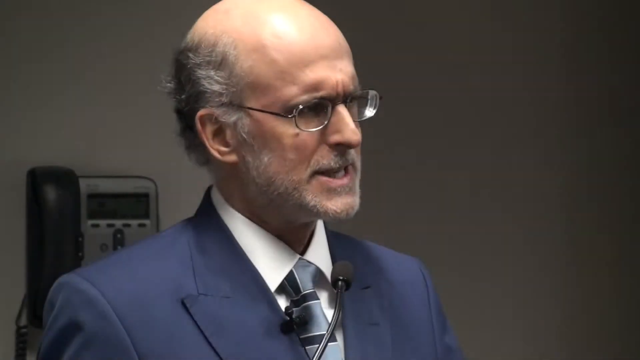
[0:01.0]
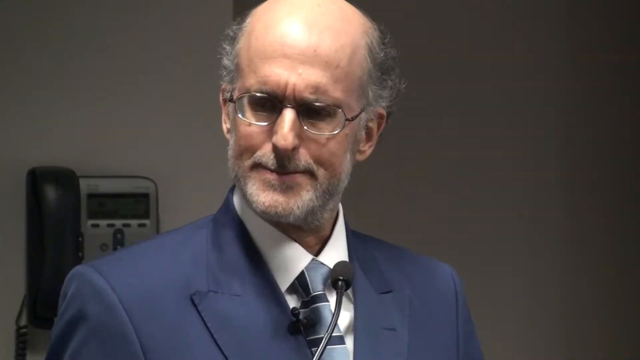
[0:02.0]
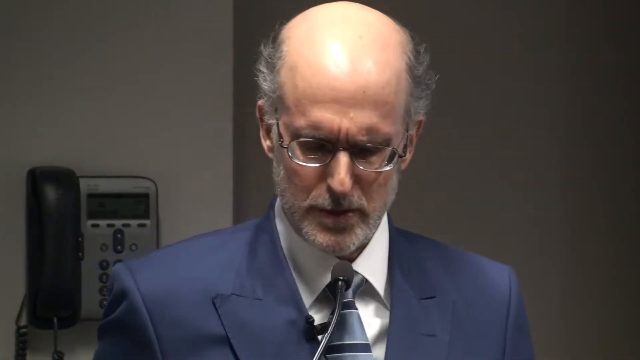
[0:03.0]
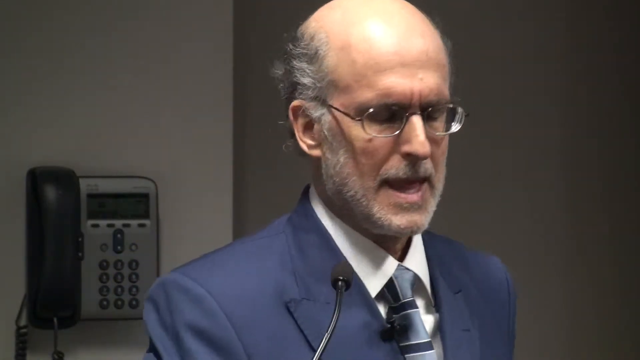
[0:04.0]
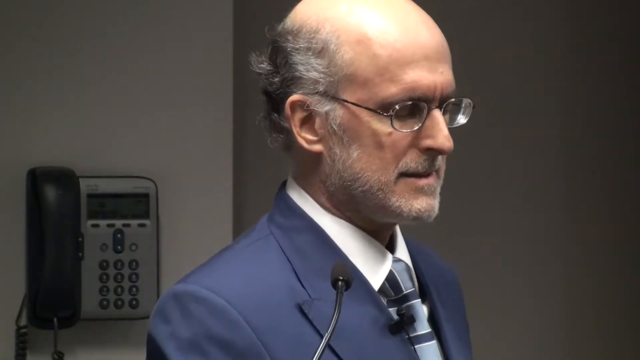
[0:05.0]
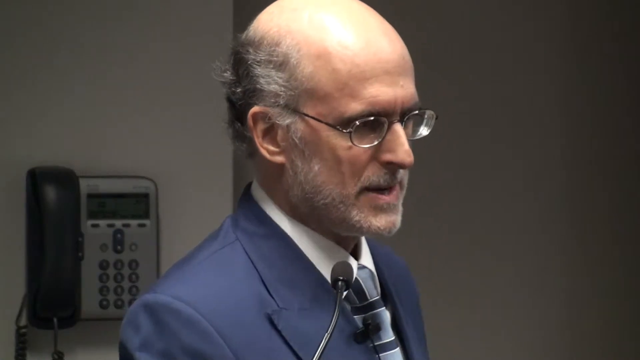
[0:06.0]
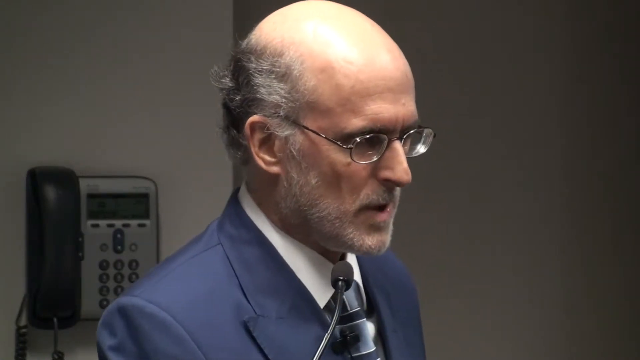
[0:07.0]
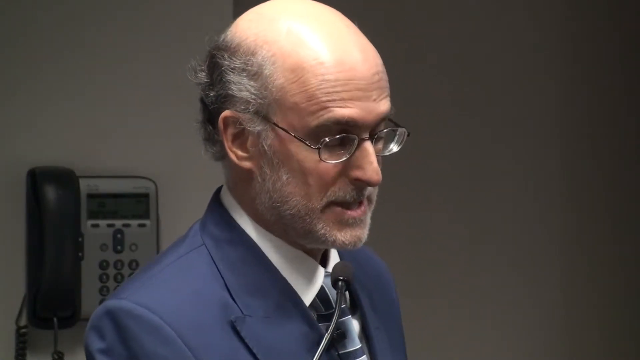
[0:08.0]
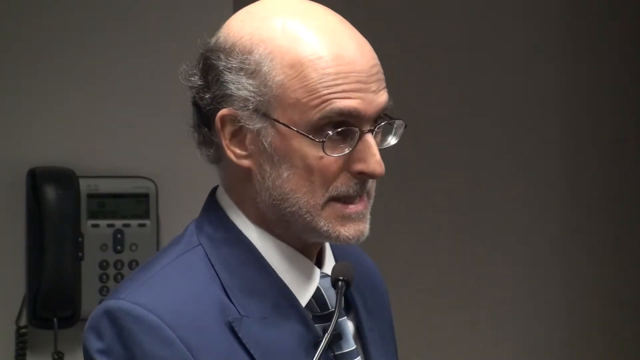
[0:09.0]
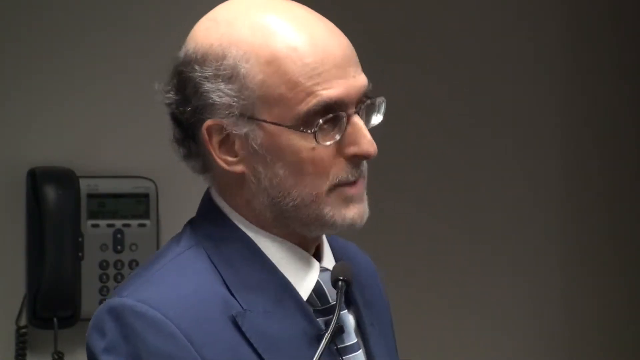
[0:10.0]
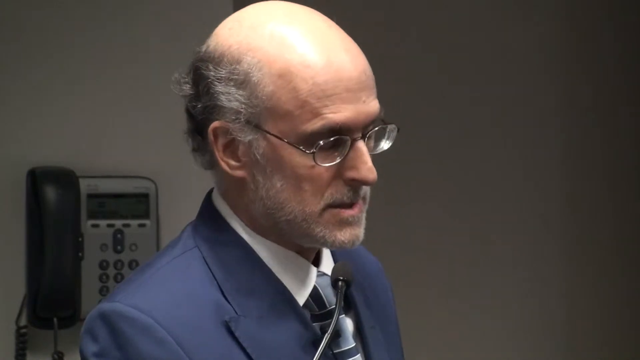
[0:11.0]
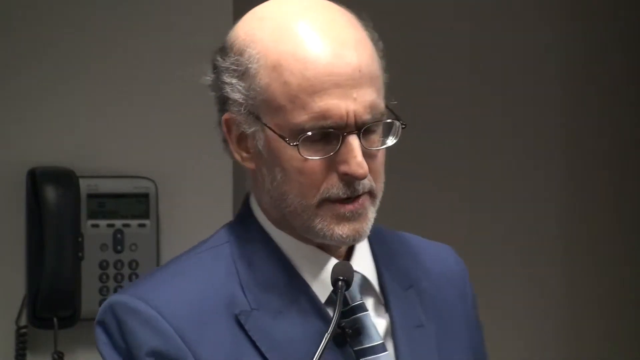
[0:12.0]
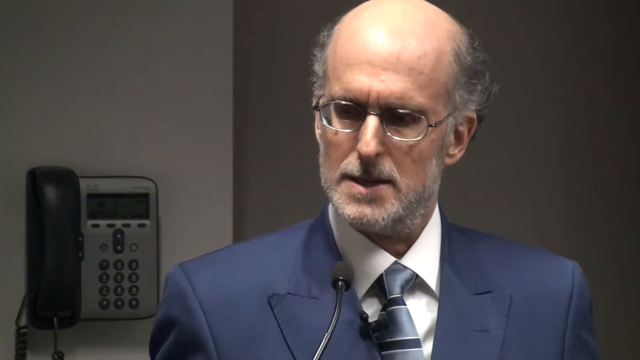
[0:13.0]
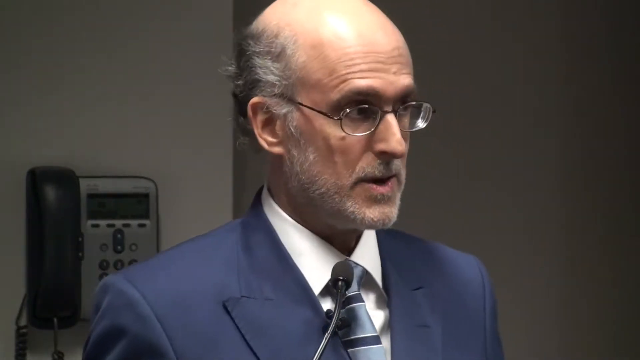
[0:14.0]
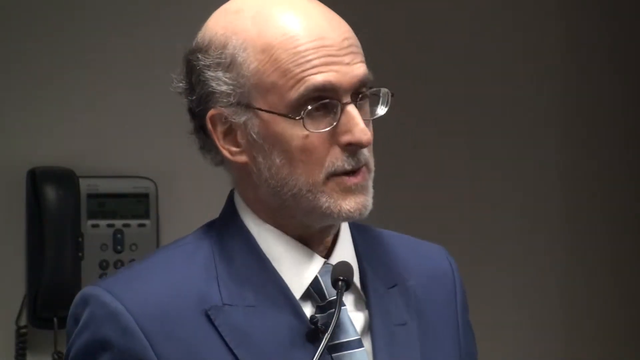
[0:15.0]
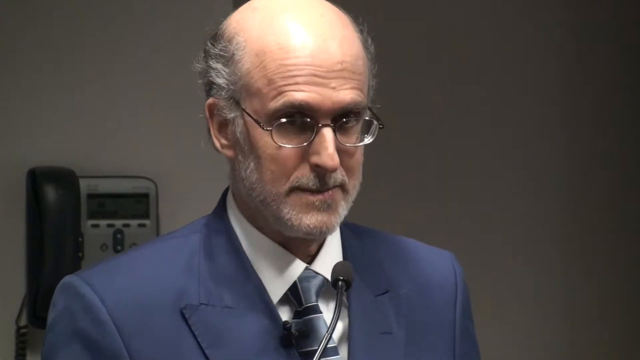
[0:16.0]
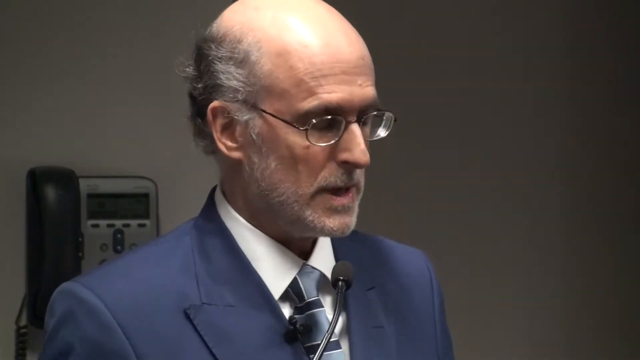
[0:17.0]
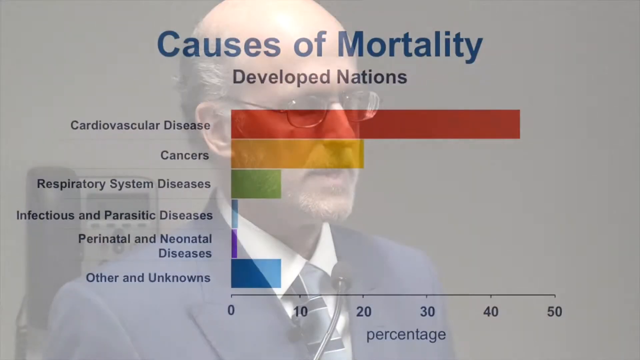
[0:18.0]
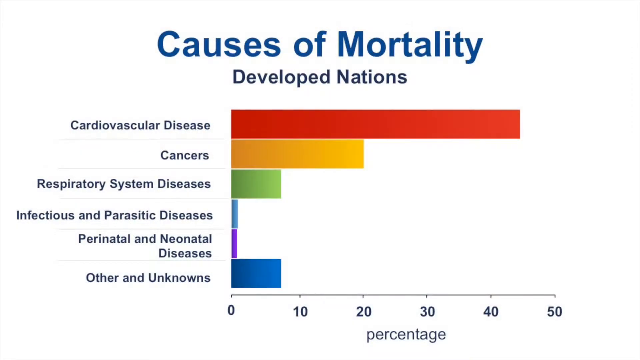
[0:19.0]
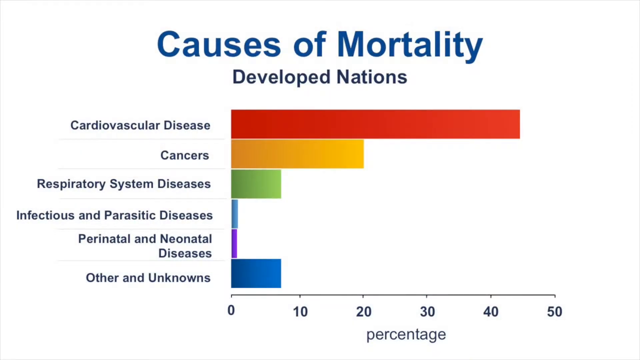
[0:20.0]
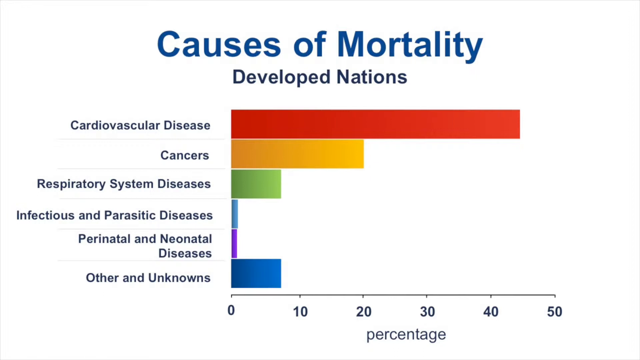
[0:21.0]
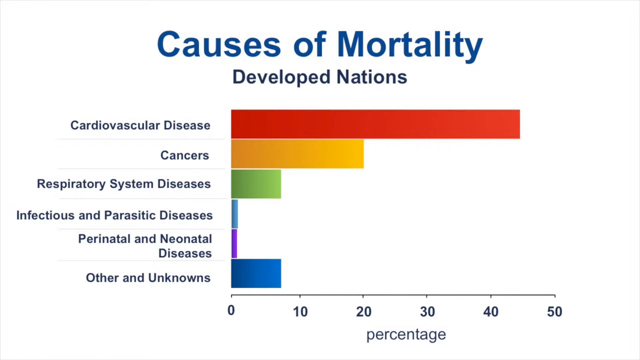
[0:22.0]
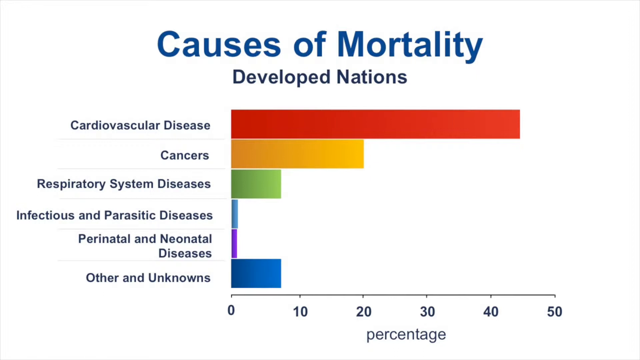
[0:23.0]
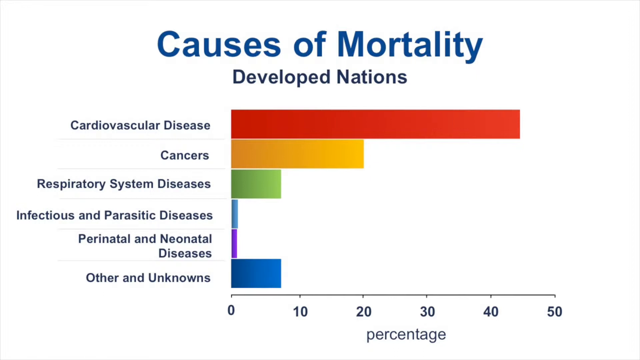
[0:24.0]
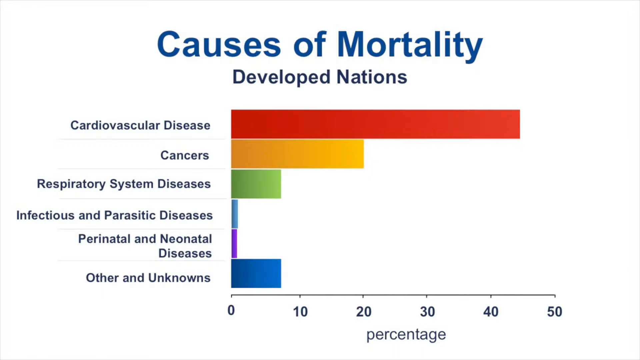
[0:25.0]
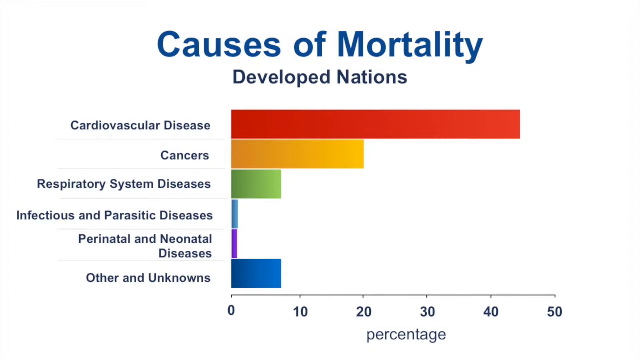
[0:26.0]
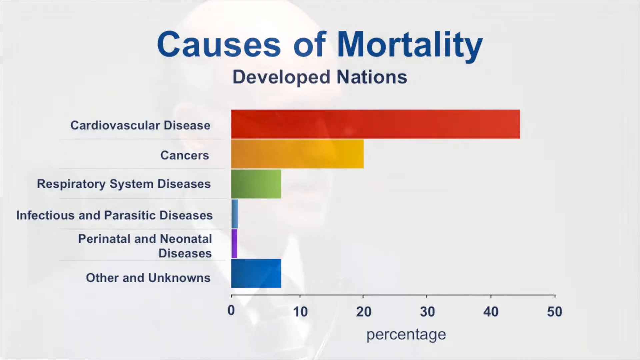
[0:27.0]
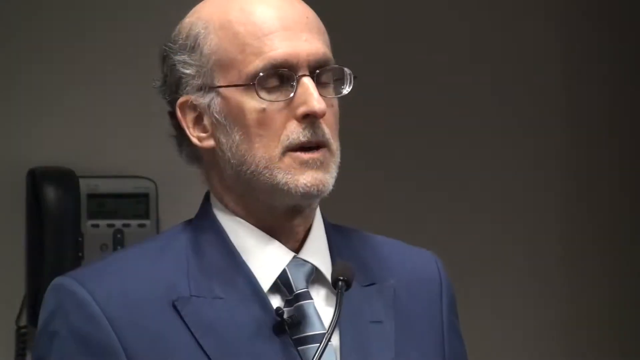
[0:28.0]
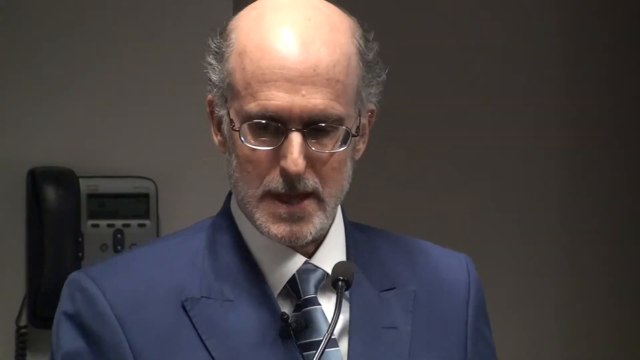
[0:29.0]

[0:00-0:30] The video starts with a solid black screen that slowly fades into an interview with a bald older man talking into a stand microphone in front of him; he also has a lapel microphone attached to his blue business suit. He is facing towards the right, and behind him there is a white painted wall and a wall telephone with a digital touchscreen. The man continues talking, looks briefly to the viewer's left, and then looks back towards the right as he talks. He moves his head up and down emphatically as he emphasizes points, and his eyebrows raise. The video then shifts to a slide with a sideways bar graph. The slide has multiple lines of text that read "causes of mortality, developed nations, cardiovascular disease, cancers, respiratory system diseases, infectious and parasitic diseases, perinatal and neonatal diseases, other and unknowns." Cardiovascular disease is listed as the number one cause of mortality in developed nations, with its red bar significantly larger than all the others.